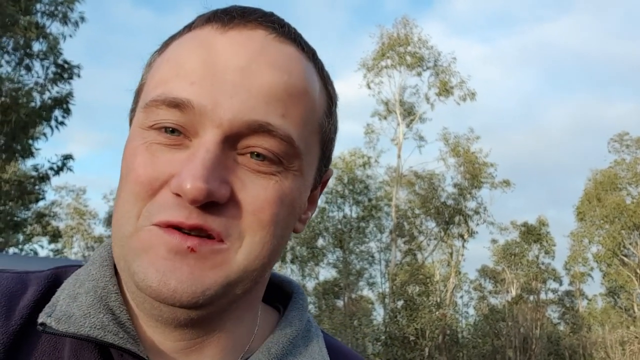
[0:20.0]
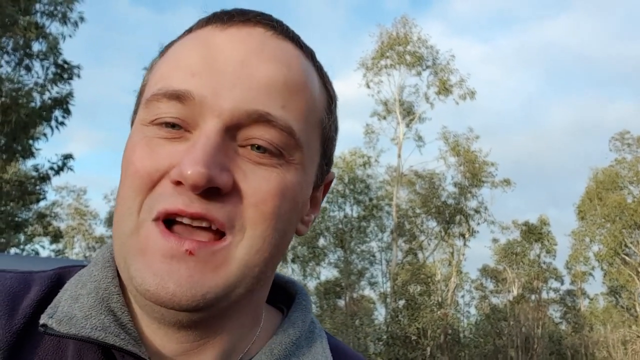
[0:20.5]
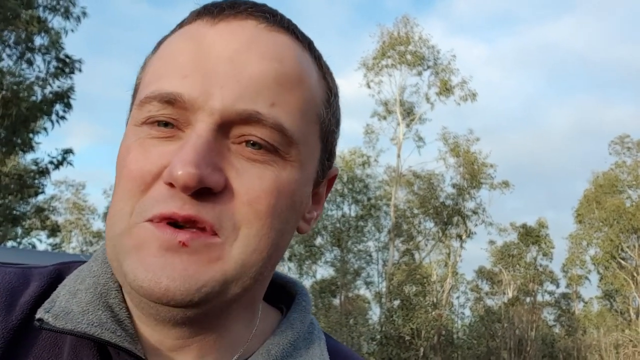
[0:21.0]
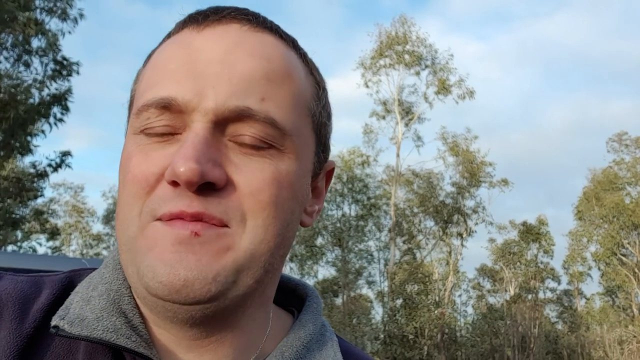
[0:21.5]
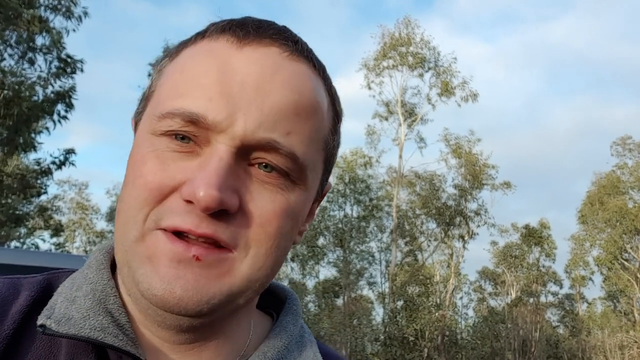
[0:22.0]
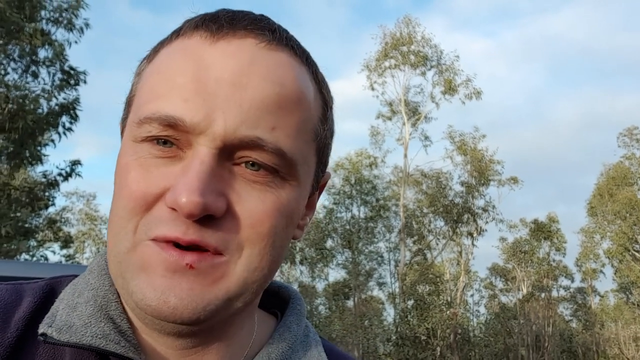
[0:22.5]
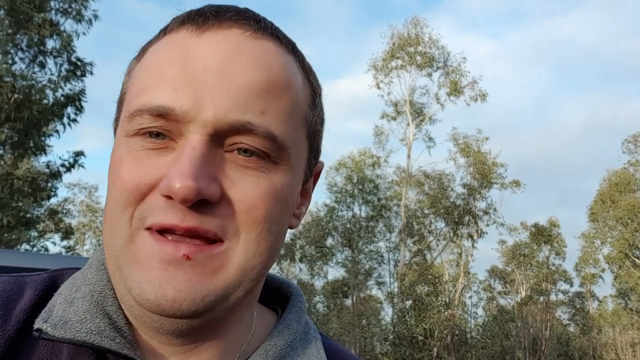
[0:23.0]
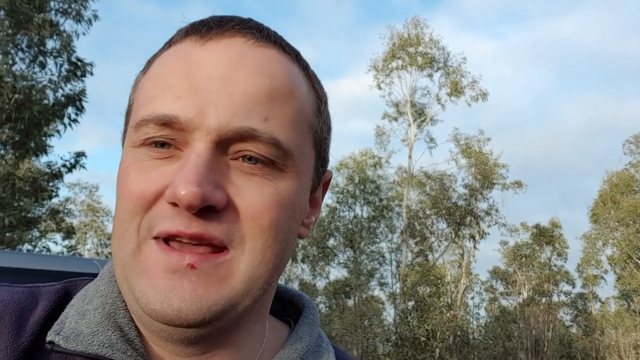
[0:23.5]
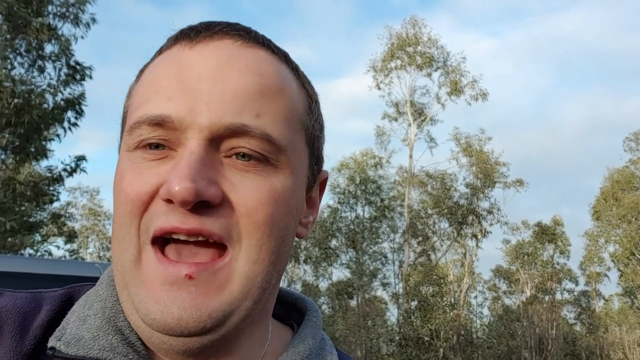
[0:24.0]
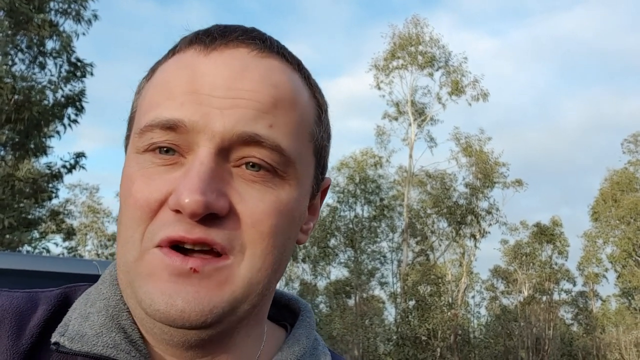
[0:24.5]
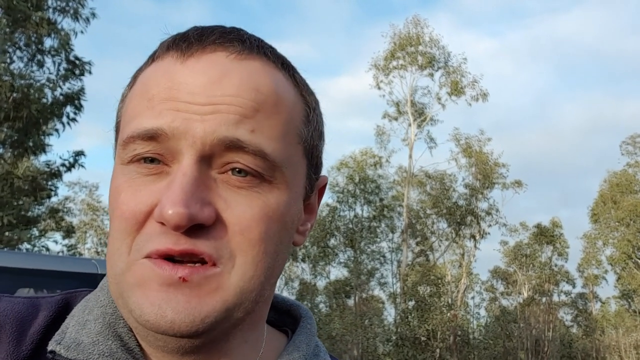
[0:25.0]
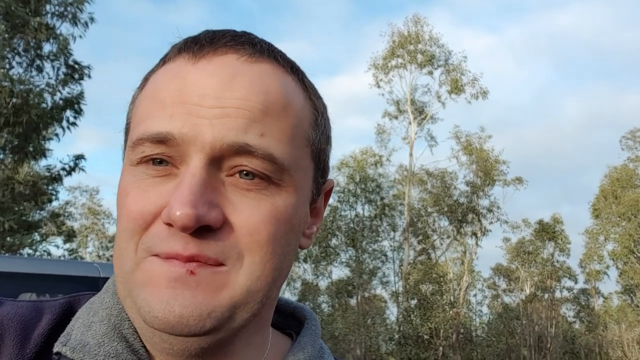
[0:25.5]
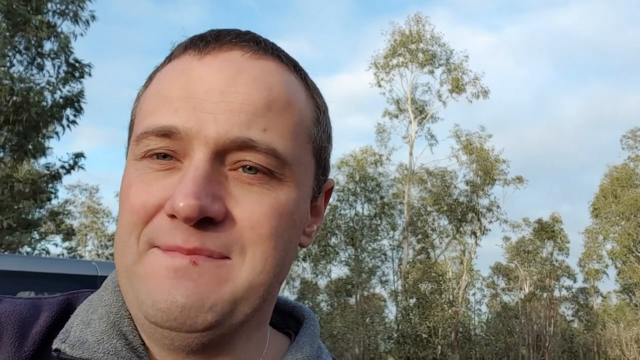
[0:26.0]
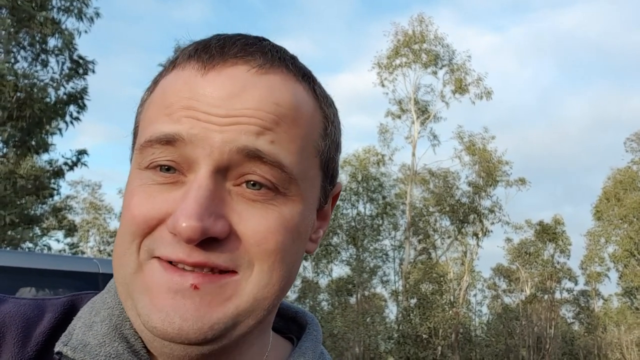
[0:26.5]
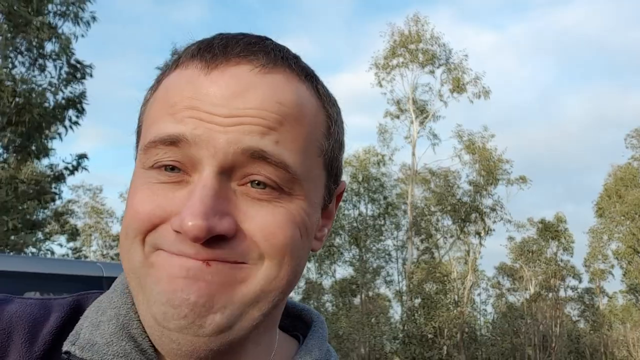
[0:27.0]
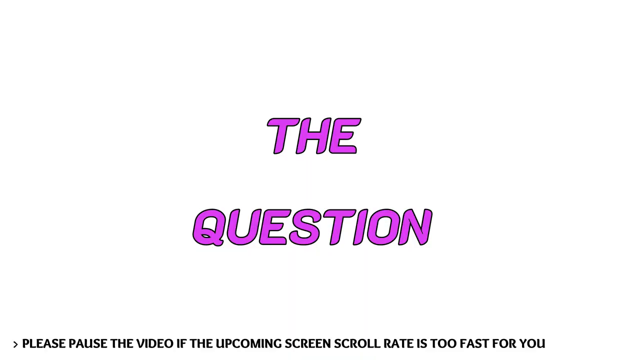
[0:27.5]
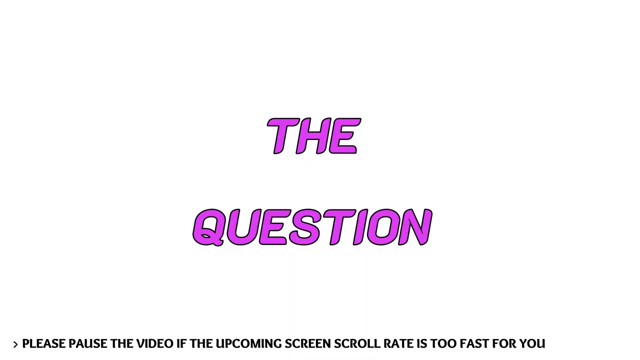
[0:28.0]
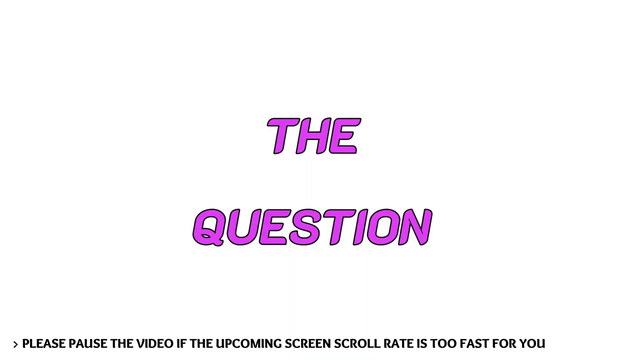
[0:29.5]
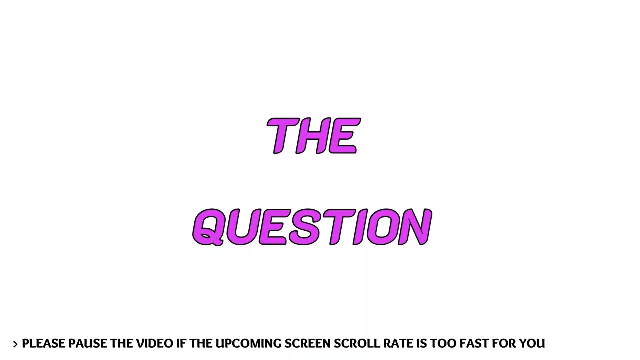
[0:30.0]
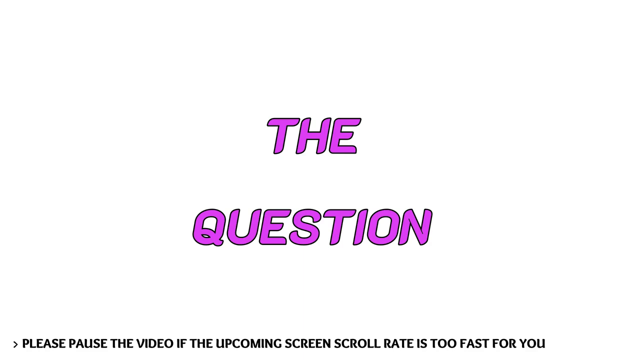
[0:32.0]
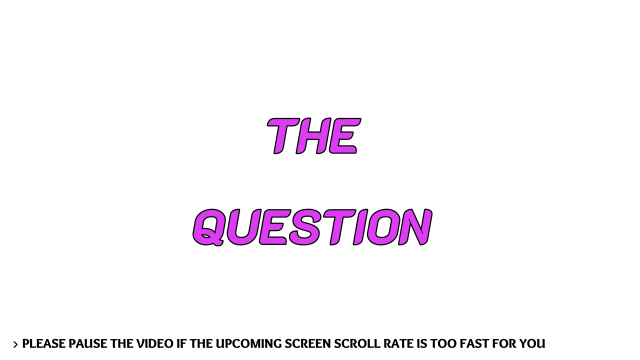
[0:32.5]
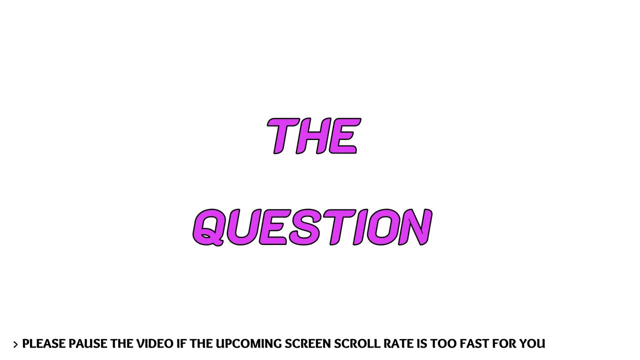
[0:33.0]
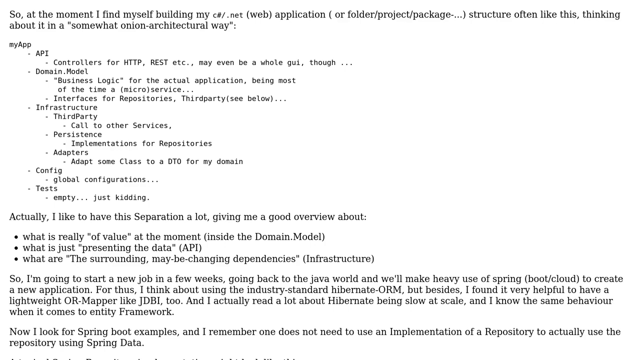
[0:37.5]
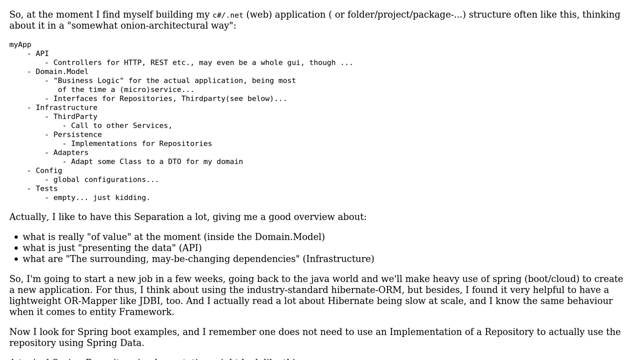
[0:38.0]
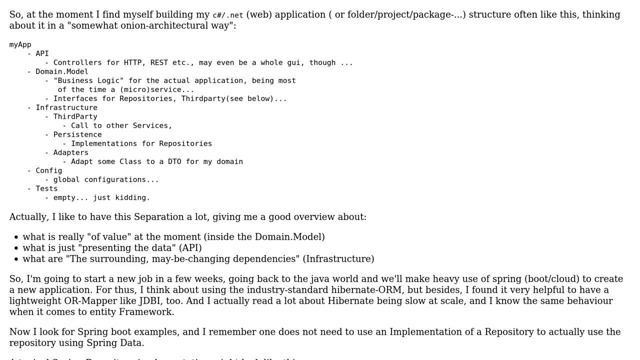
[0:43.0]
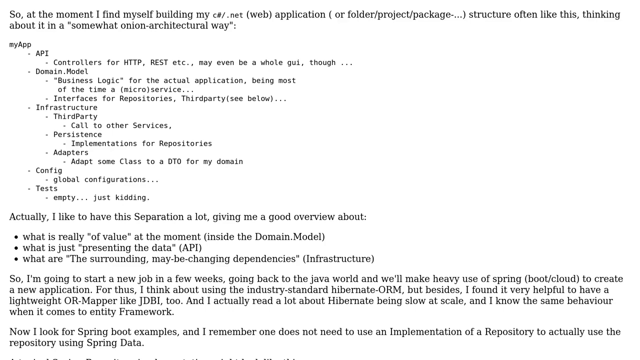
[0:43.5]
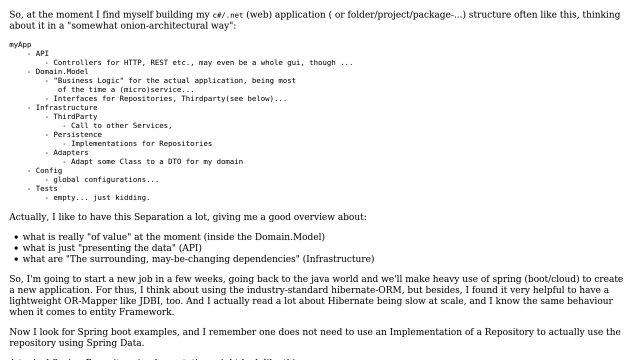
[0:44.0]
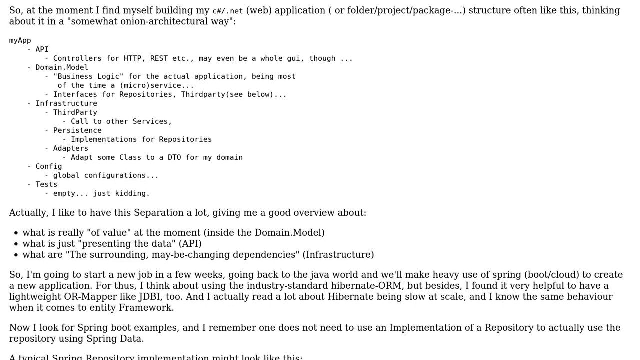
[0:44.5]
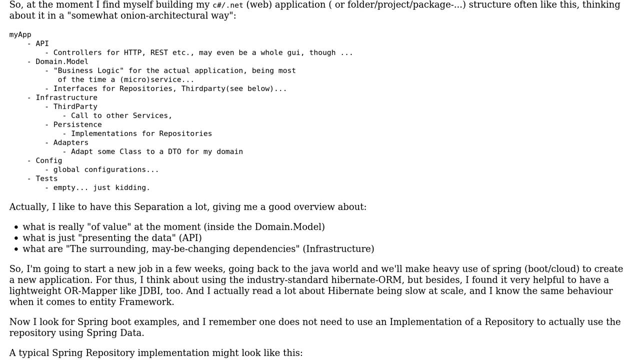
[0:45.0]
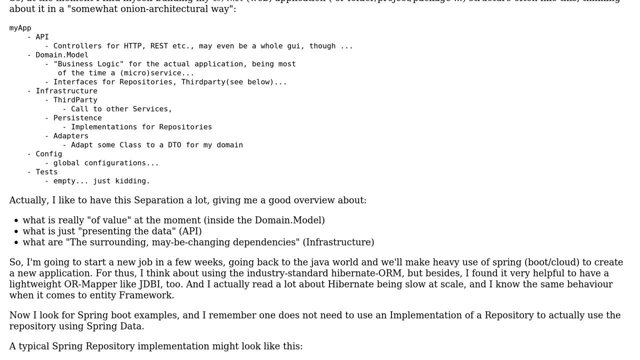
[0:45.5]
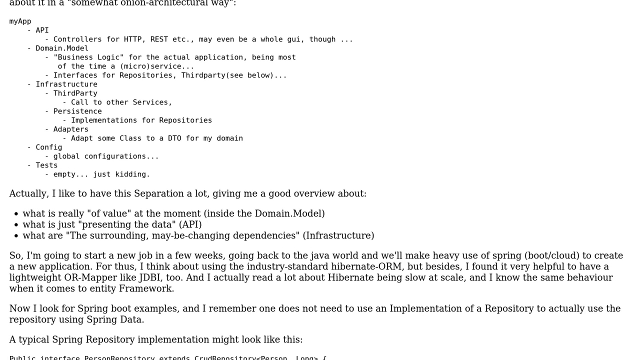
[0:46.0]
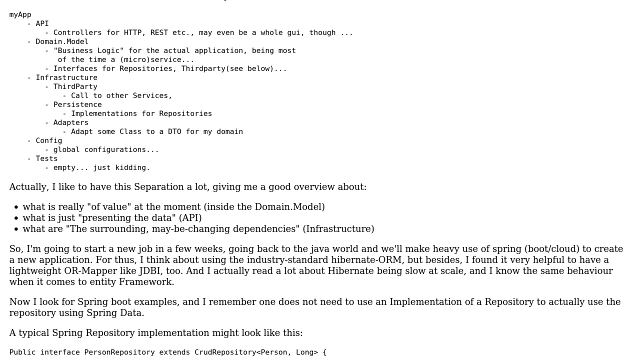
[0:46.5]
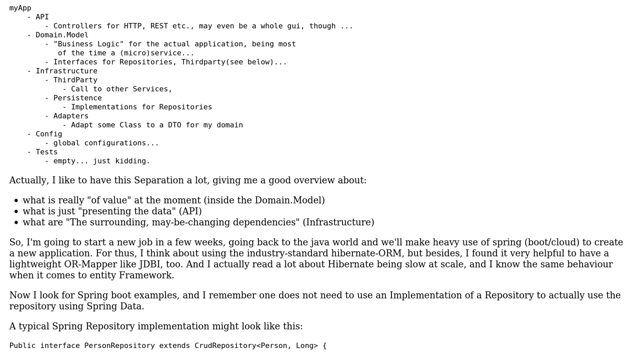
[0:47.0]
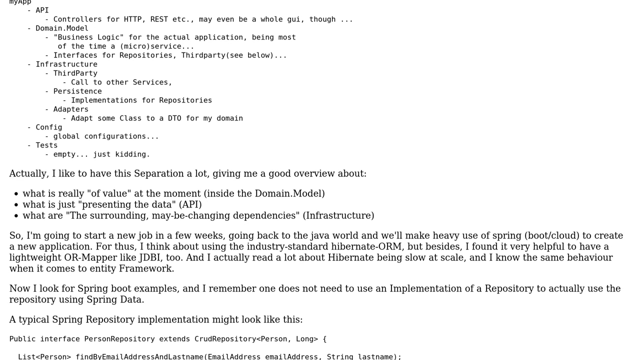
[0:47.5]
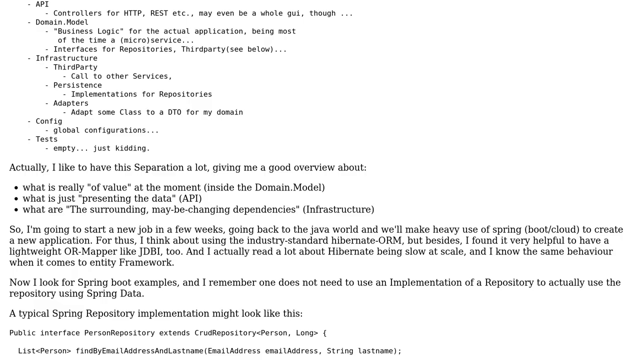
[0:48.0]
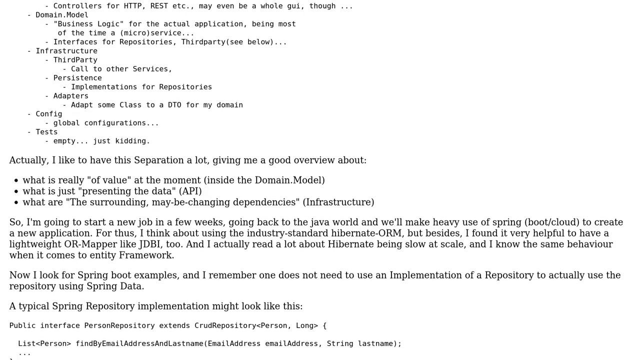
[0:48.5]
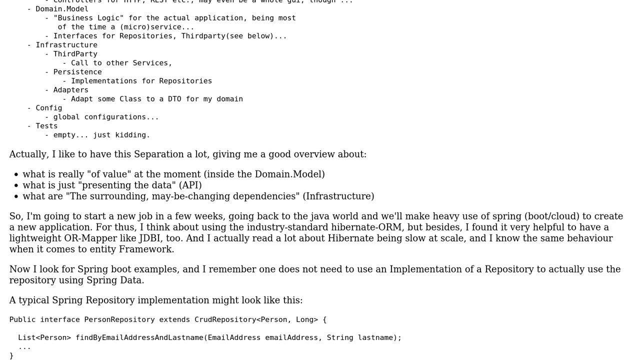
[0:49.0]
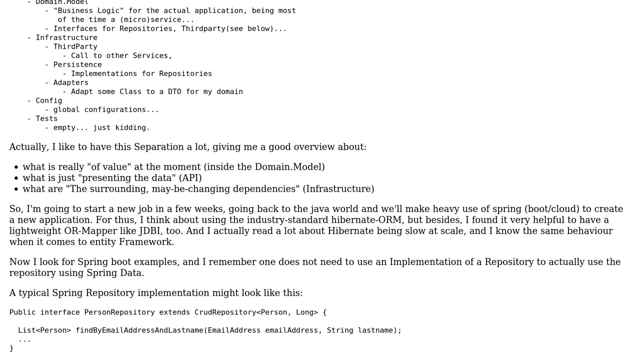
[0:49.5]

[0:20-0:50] The man talks to the camera, which is at a low angle, apparently slightly below the horizon, looking up at him. Clouds are visible in the sky, and his face is clearly seen, well lit outdoors. He seems to have friendly, kind-looking eyes and appears to be in a good mood. After a few moments the video cuts to a caption screen with a white background and the words "the question" in all capitals in purple letters. Then text appears that looks like a to-do list, instructions or maybe code, seemingly in a code editor or text editor: black text on a white background with little formatting beyond indentations and possibly some bullet points. The text mentions building a C-sharp .NET web application in an onion-architectural way, with an API for controllers, domain model, infrastructure, config, and tests.